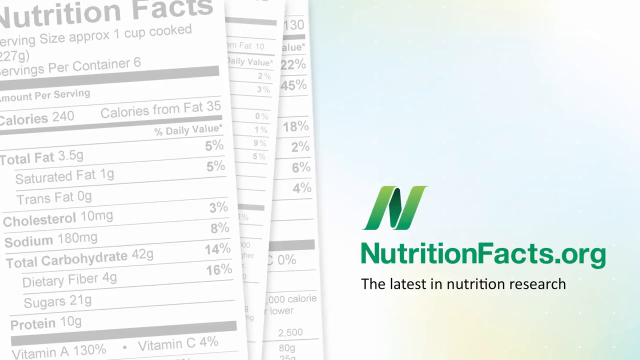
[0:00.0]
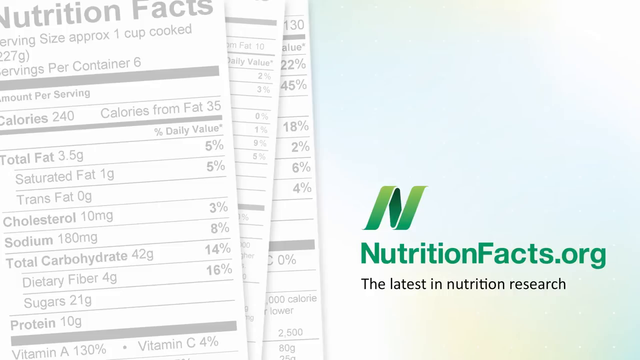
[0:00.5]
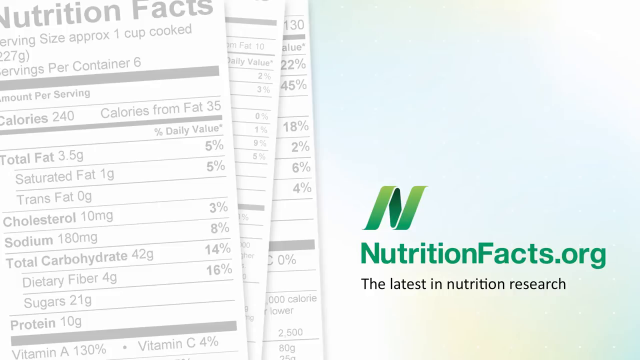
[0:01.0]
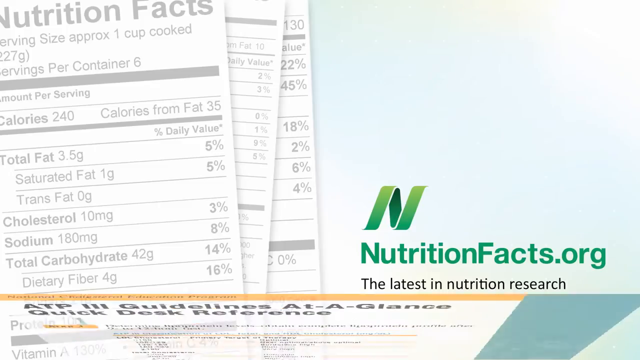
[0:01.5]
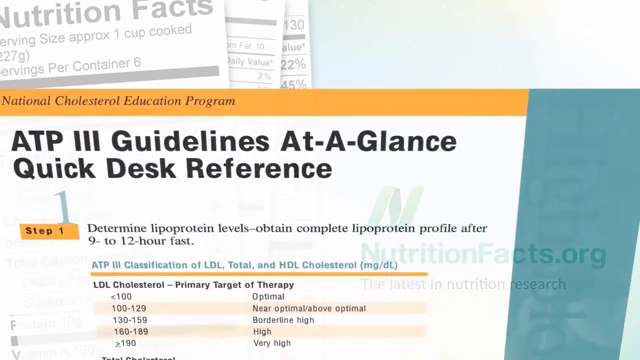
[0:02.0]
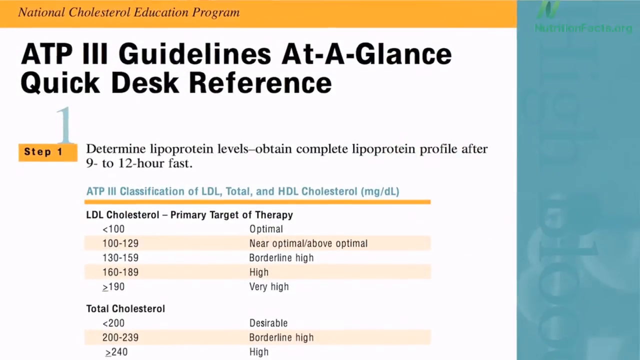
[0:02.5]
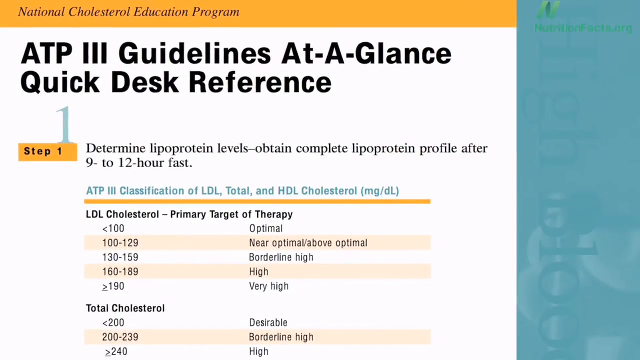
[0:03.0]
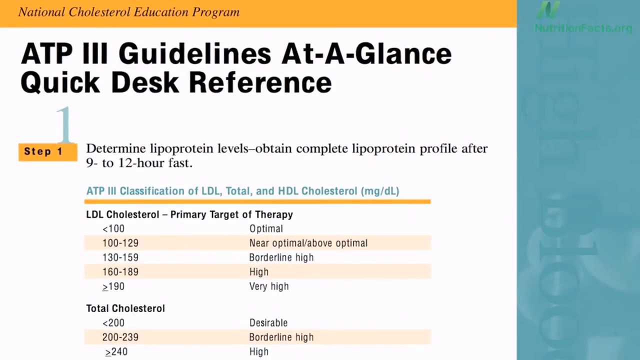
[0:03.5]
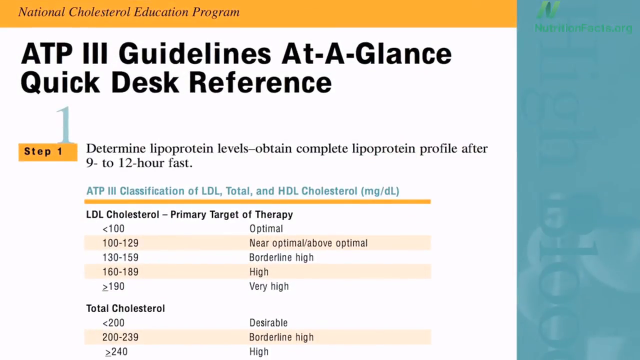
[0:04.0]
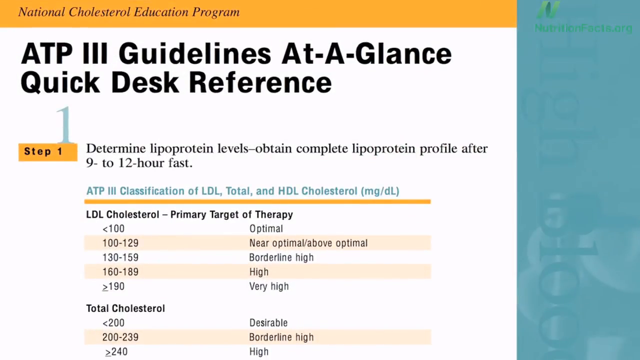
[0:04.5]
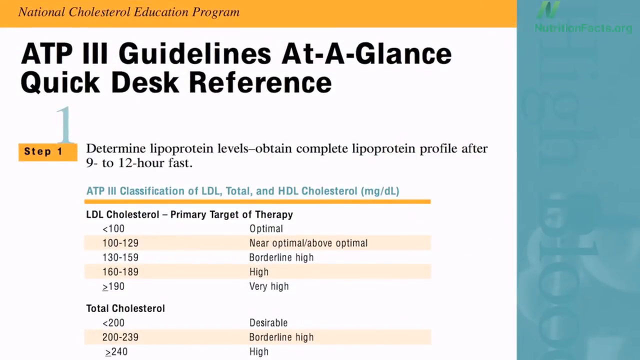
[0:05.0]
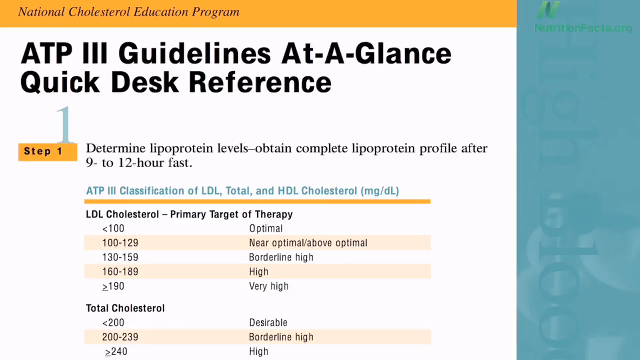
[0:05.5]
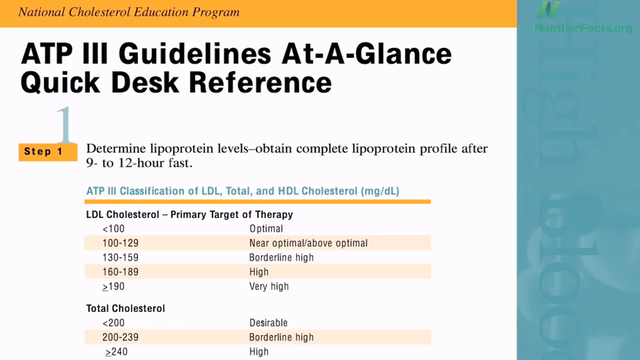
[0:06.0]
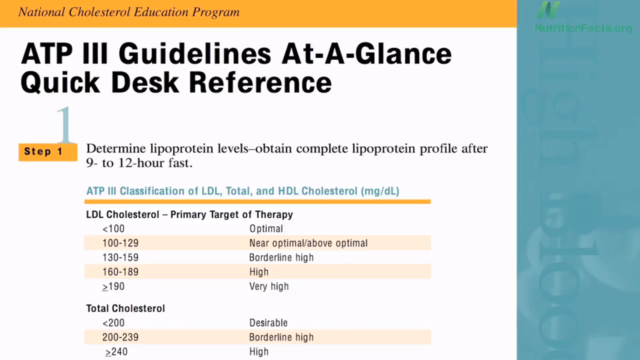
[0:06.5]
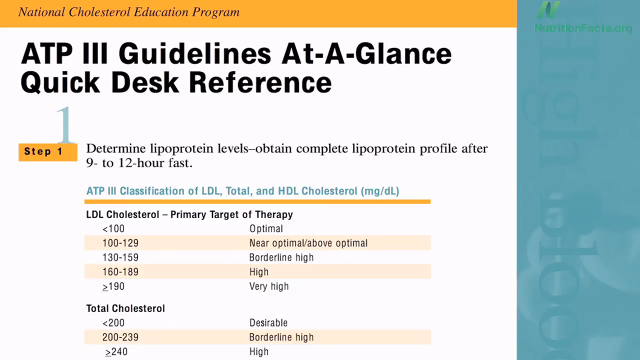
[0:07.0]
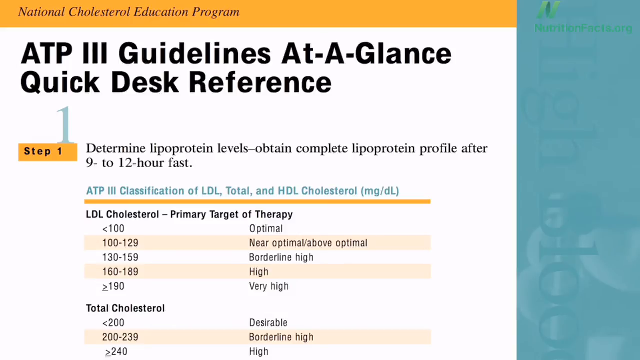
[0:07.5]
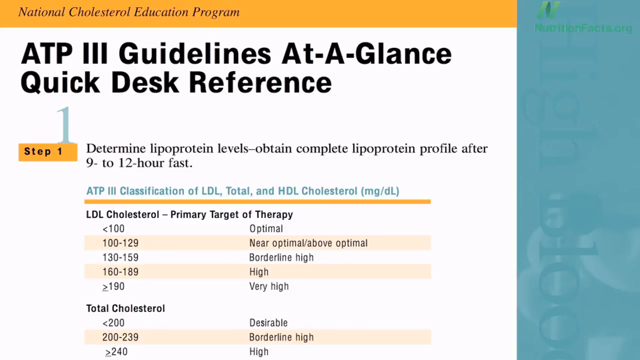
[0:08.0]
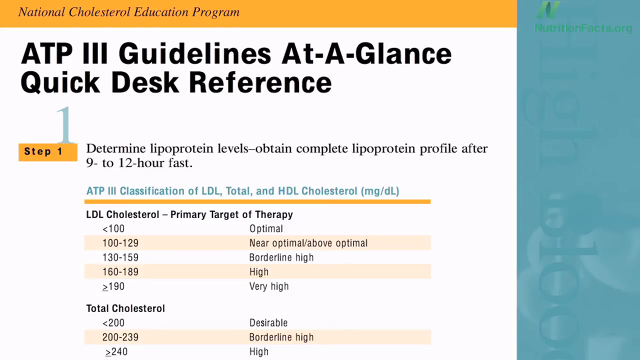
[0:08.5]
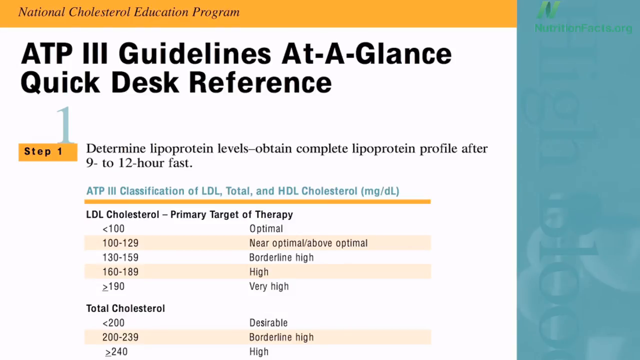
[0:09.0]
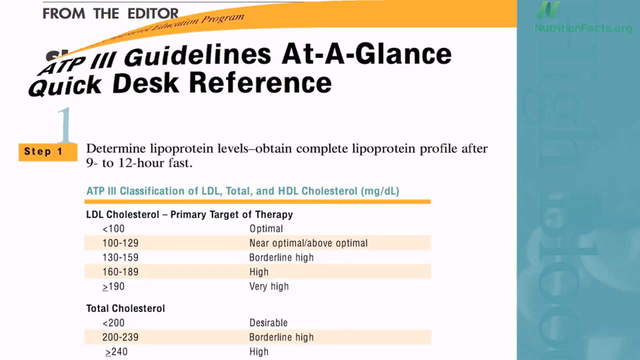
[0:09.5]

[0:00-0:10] A slide from Nutritionfacts.org shows the name in green, with a logo of a kind of ribbon in an N shape above it and a splash underneath reading "the latest in nutrition research." The slide deck has a faint gradient of sort of teal and white, and in the background there is a greyed-out image that seems to be nutrition fact sheets. A new slide comes up for the National Cholesterol Education Programme: "ATP3 guidelines at a glance quick desk reference." An orange banner runs across the top and a bluish-teal banner along the right edge. A subheading, "step one," is in a kind of orange box with a large "1" in teal above it, and reads "determine lipoprotein levels, obtain complete lipoprotein profile after 9 to 12 hours fast." Under that is a table with a blue heading, barred in a kind of peachy orange and white, giving levels of LDL cholesterol against the appropriate primary target for therapy.